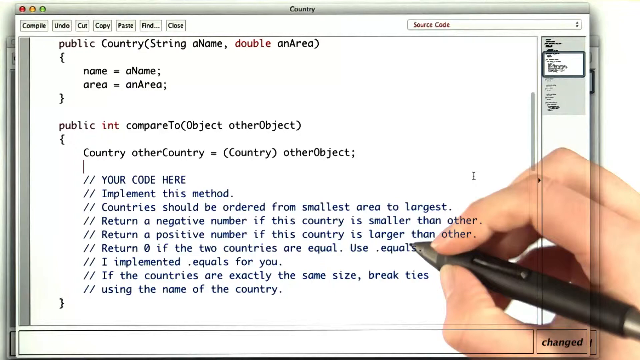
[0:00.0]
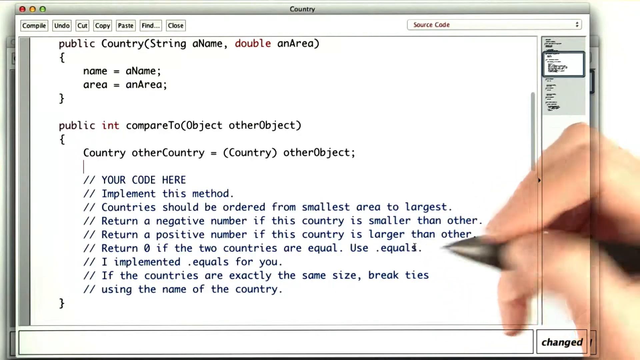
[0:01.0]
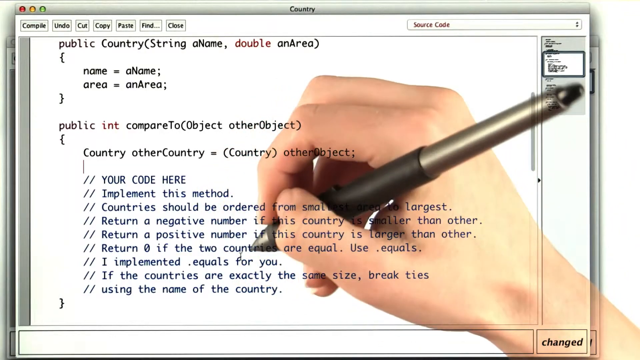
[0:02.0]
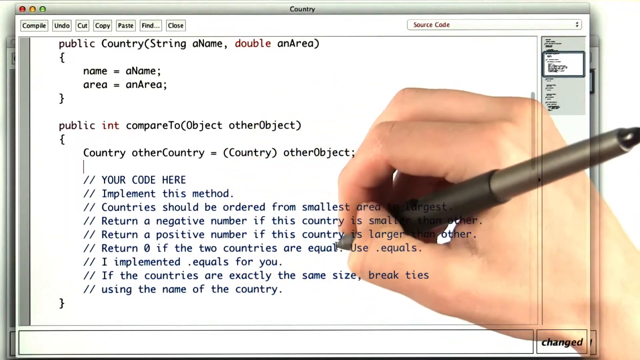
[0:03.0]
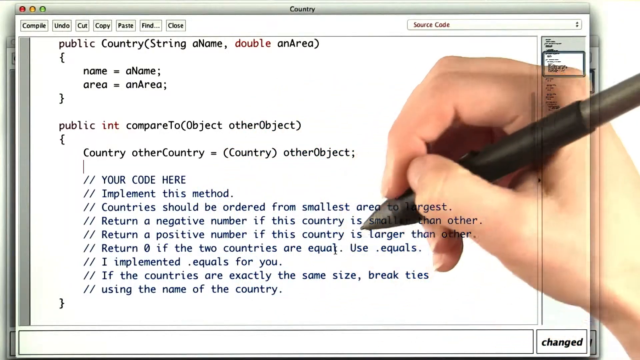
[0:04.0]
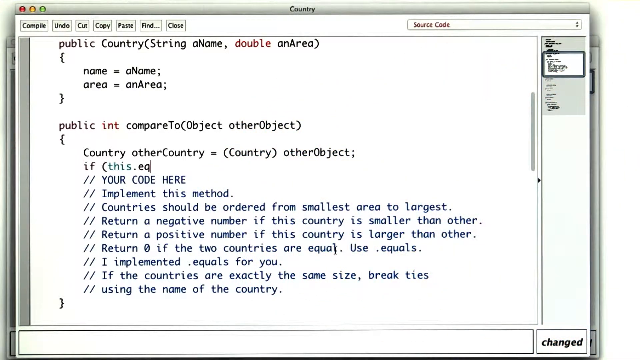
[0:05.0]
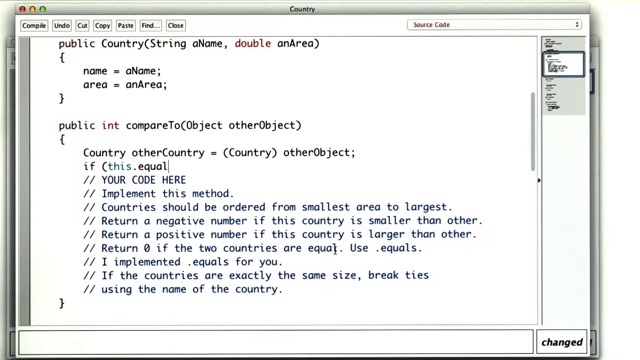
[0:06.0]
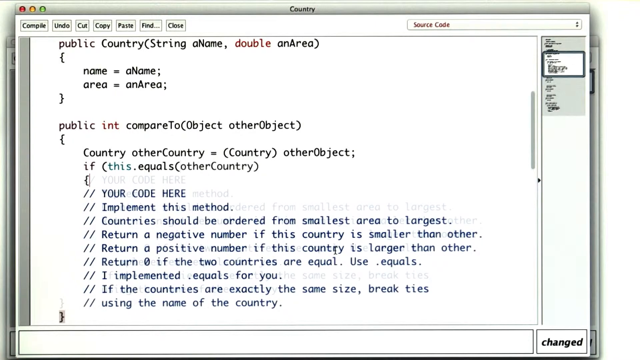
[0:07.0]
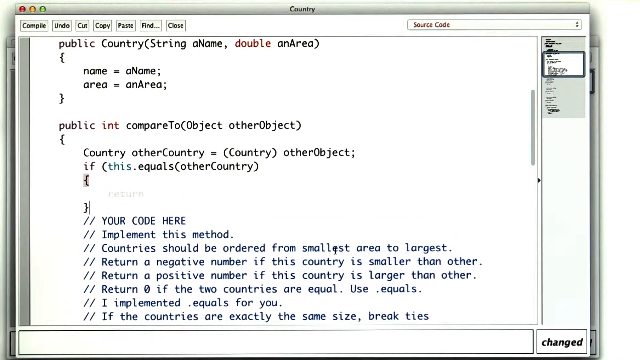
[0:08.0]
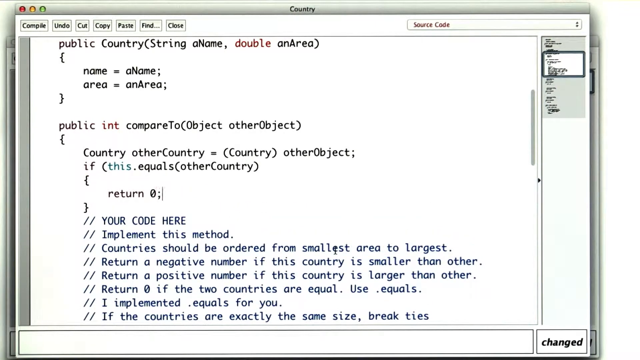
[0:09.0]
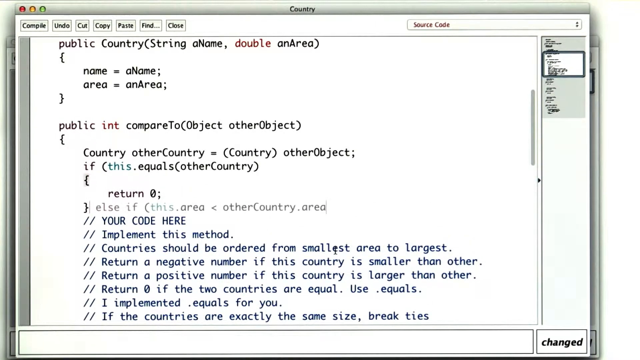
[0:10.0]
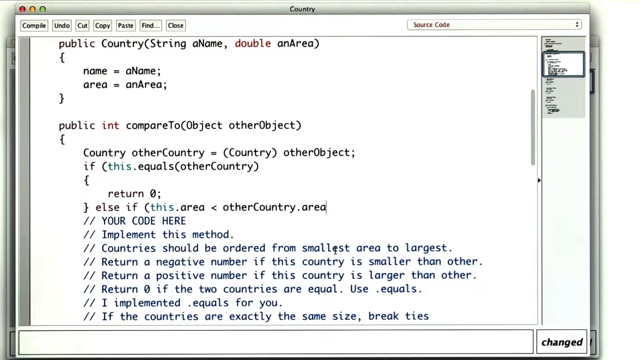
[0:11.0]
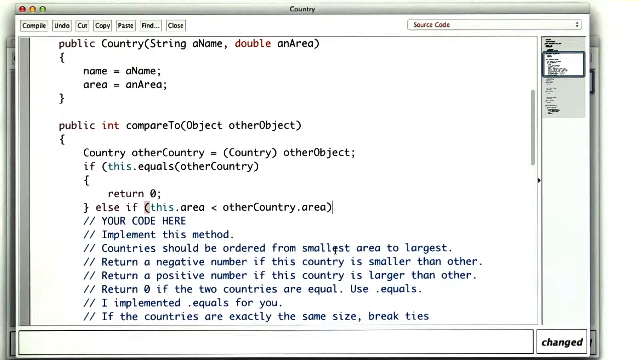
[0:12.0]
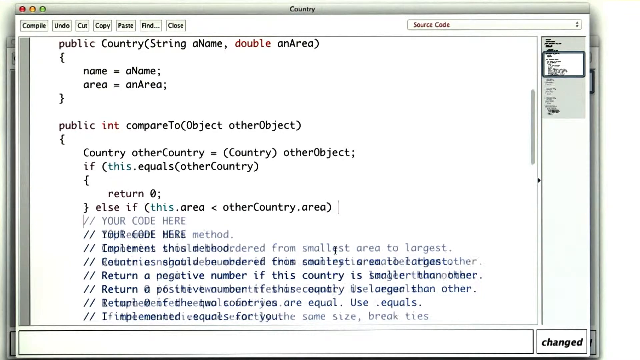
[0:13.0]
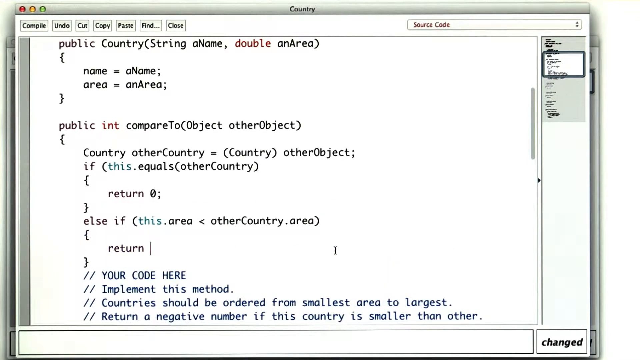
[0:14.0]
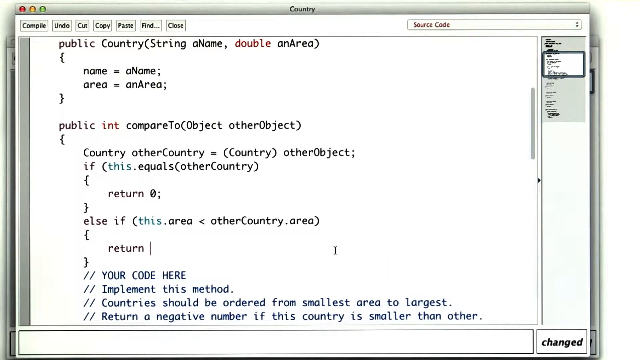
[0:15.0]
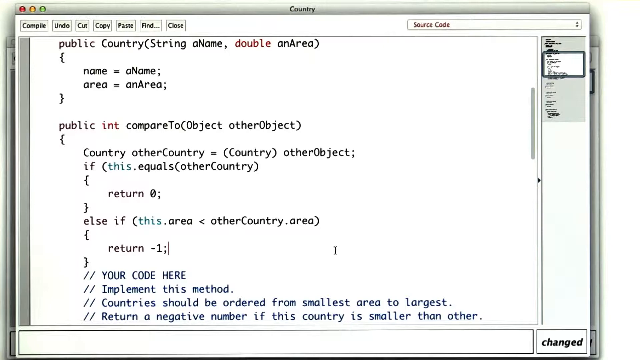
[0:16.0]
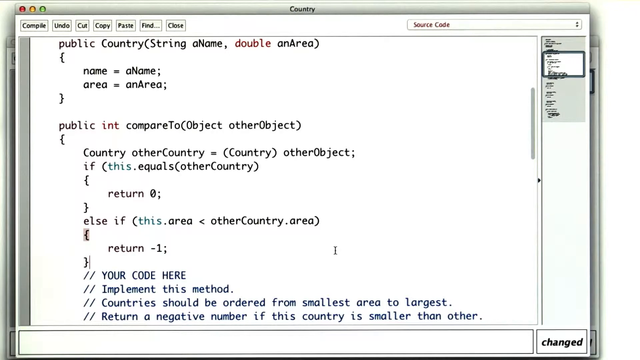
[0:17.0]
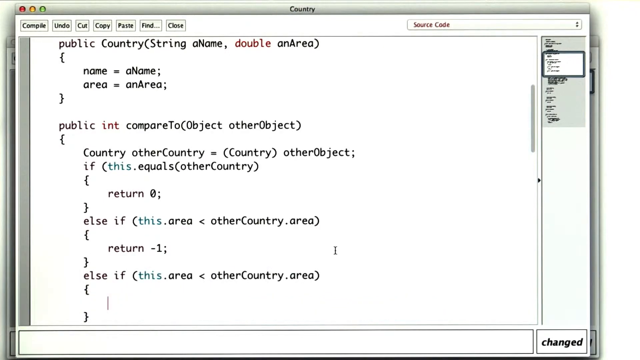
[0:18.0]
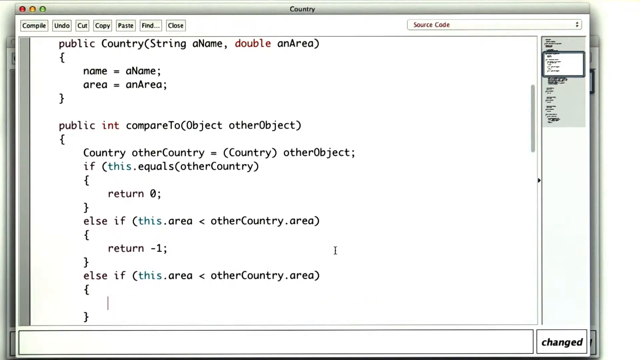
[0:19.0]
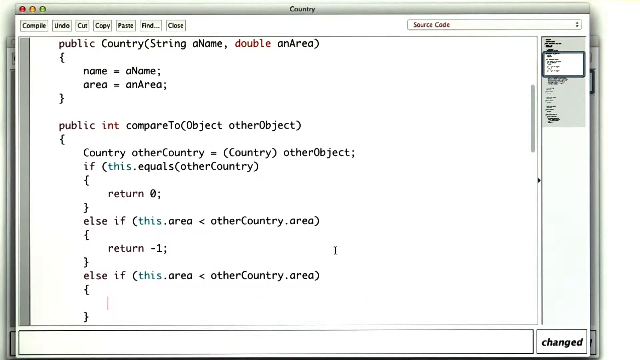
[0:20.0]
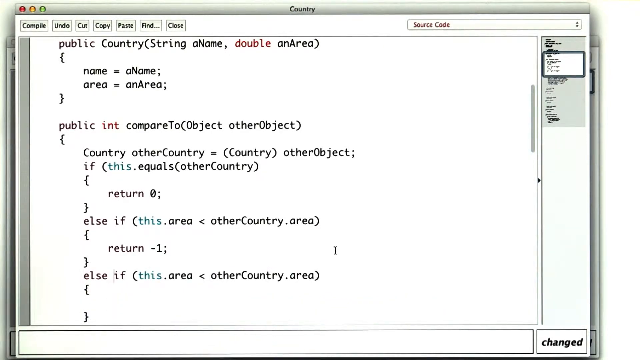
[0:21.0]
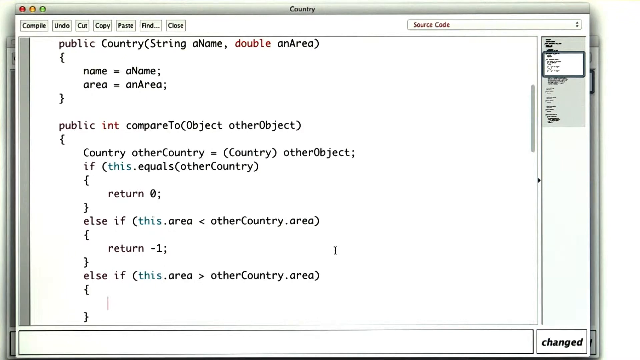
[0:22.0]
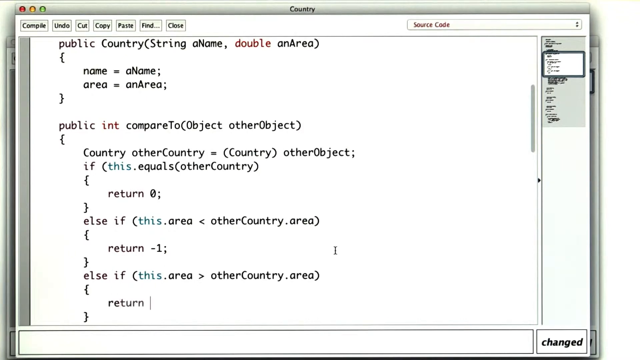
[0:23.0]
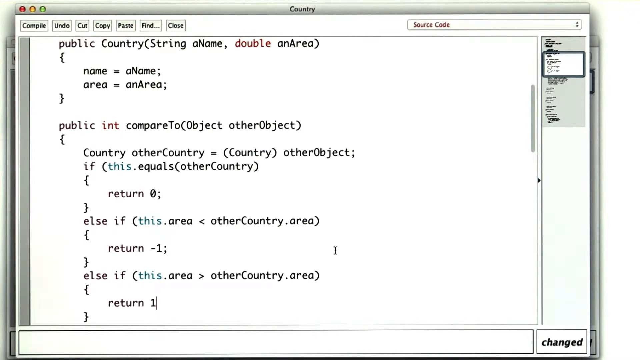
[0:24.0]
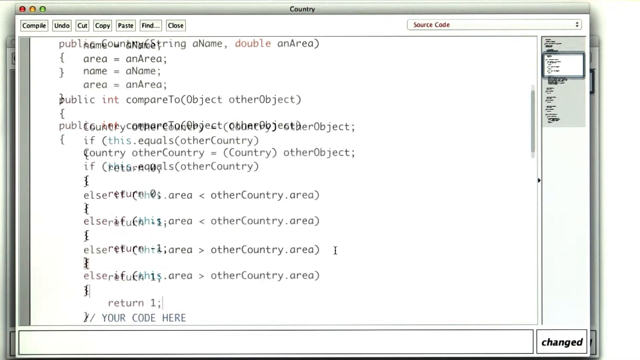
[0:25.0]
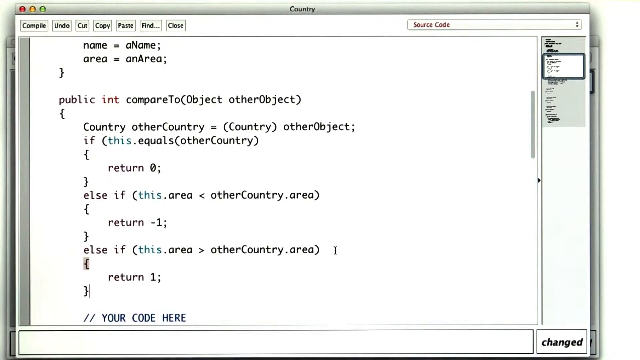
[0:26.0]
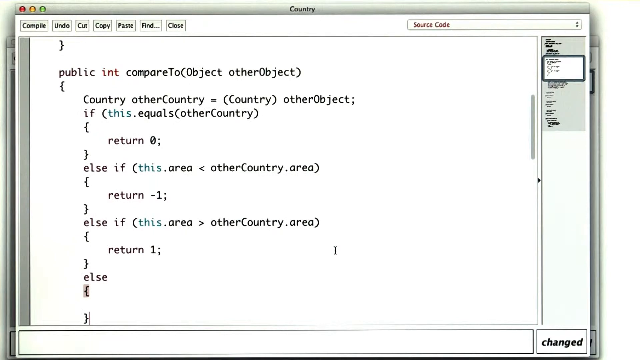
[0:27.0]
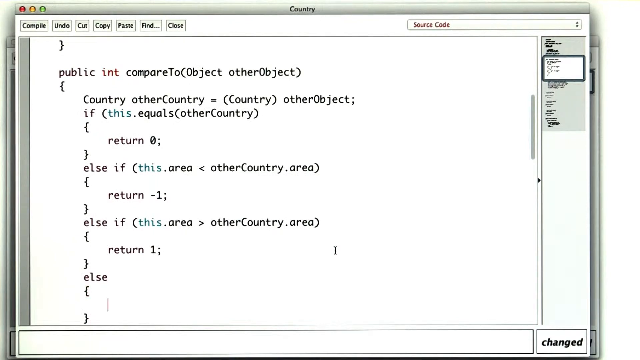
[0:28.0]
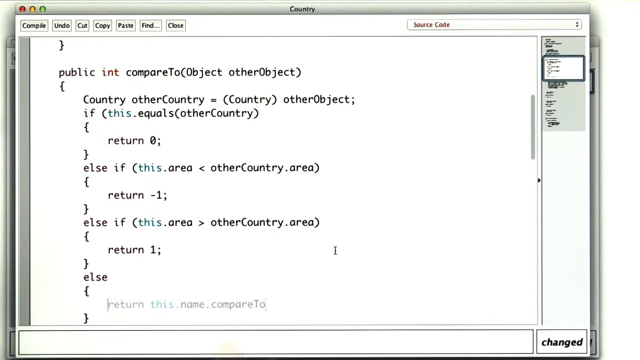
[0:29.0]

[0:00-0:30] Code is shown on a computer while someone holding a pen writes over it. It looks almost like a screen recording, somewhat like a how-to video in which someone is kind of showing what they are doing. Not much changes; the code gets added to as the video goes on. The setting is someone's computer, with a hand overlaid on the screen. The hand is Caucasian and does not look old, so the person might be quite young. Apart from the hand, everything visible is on the computer.